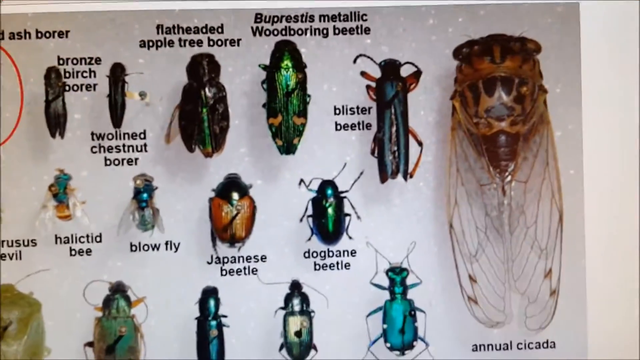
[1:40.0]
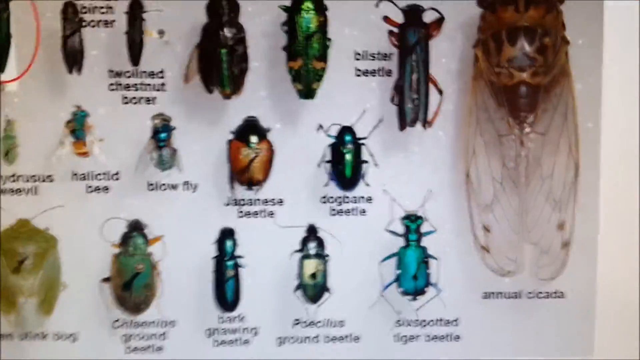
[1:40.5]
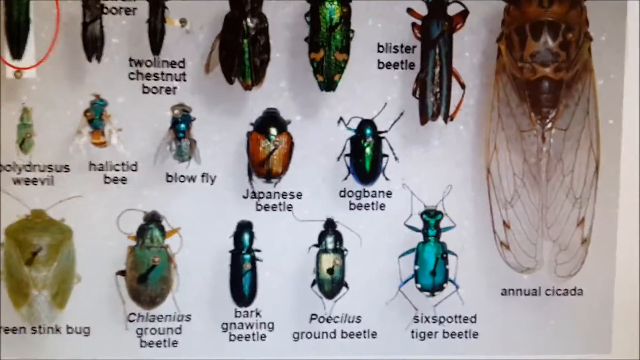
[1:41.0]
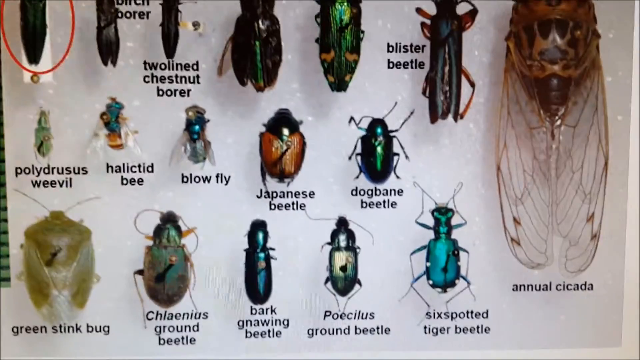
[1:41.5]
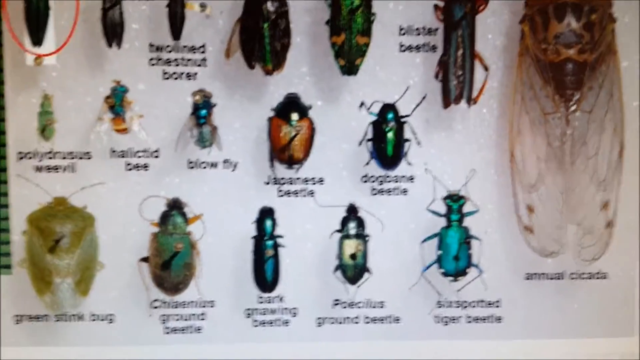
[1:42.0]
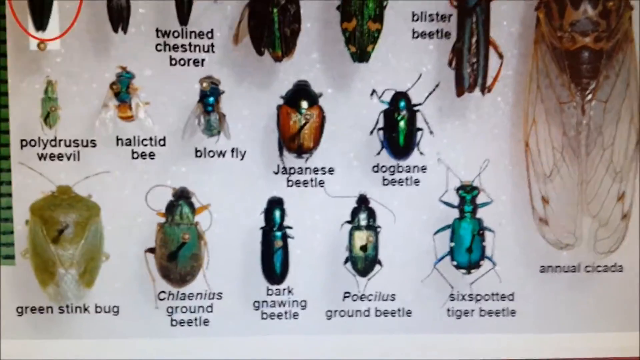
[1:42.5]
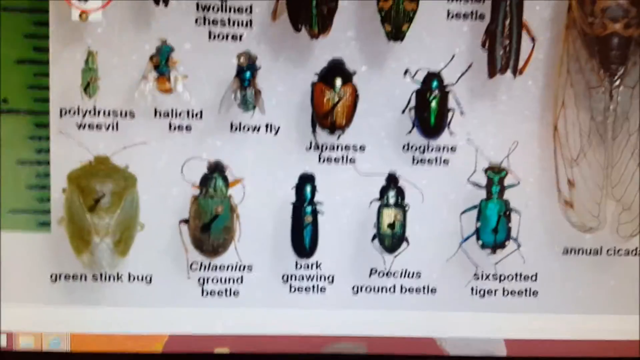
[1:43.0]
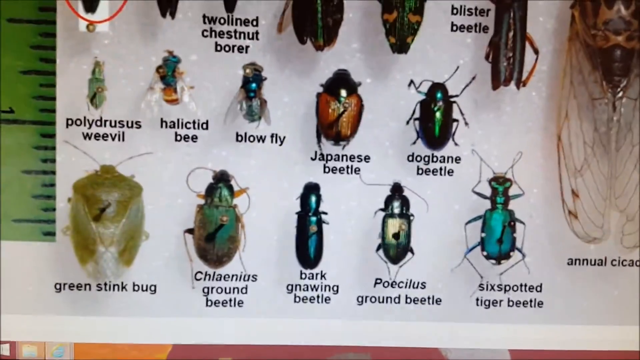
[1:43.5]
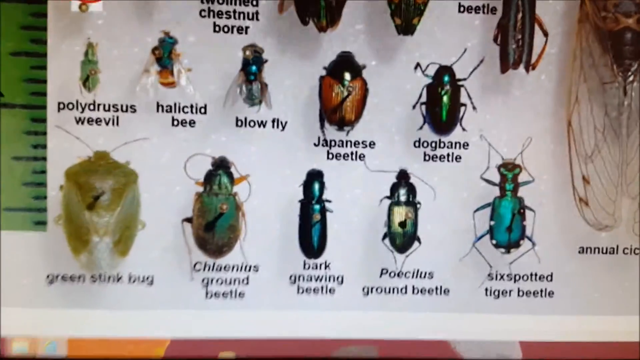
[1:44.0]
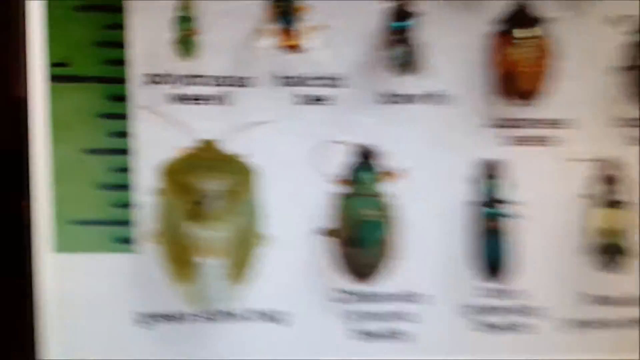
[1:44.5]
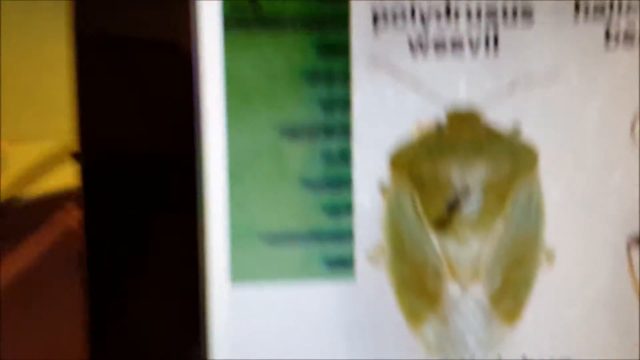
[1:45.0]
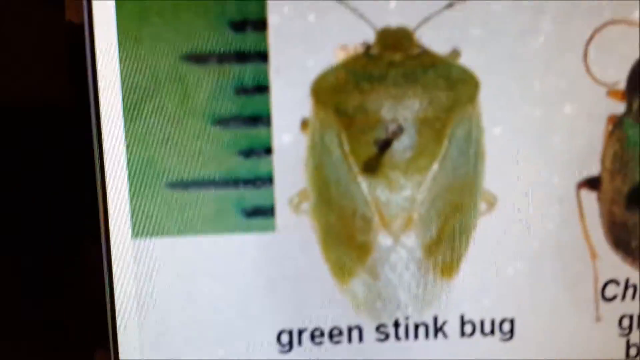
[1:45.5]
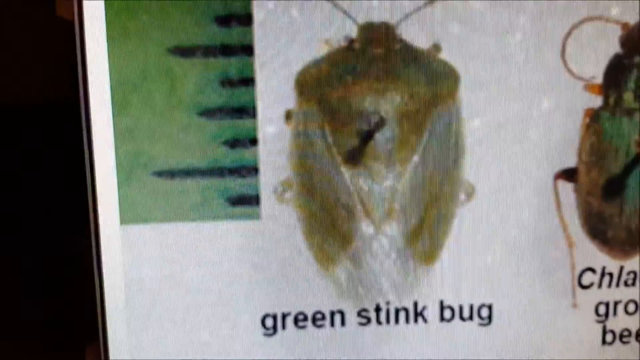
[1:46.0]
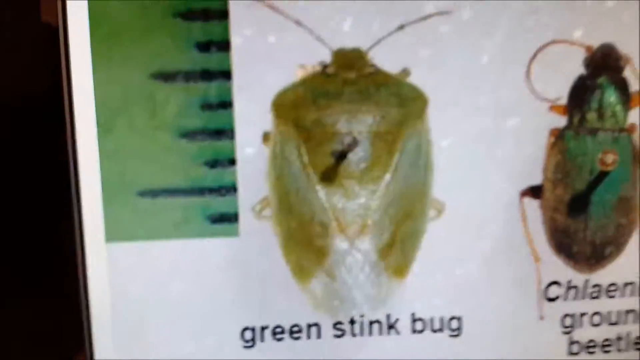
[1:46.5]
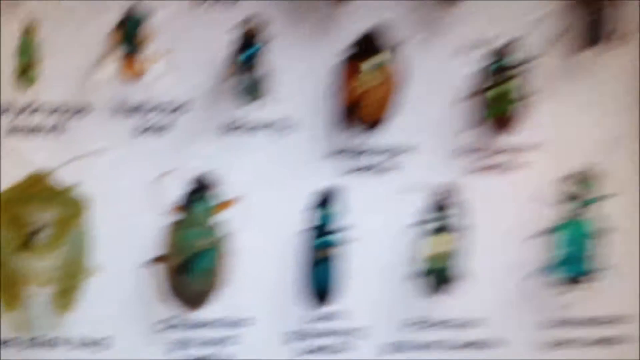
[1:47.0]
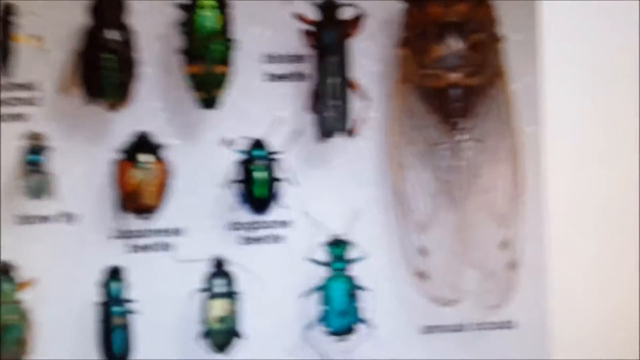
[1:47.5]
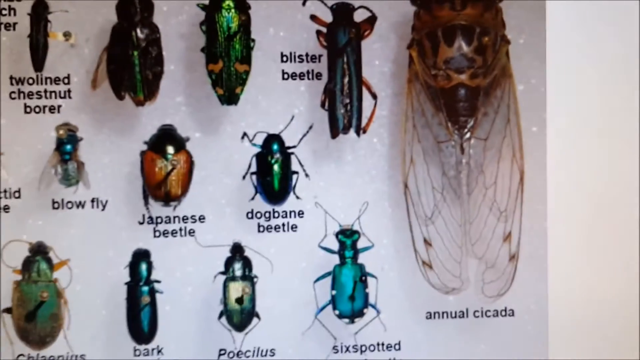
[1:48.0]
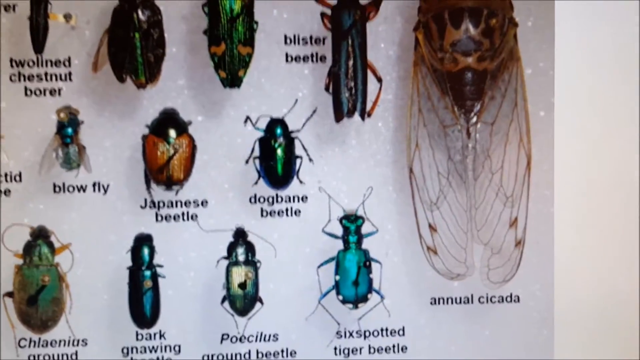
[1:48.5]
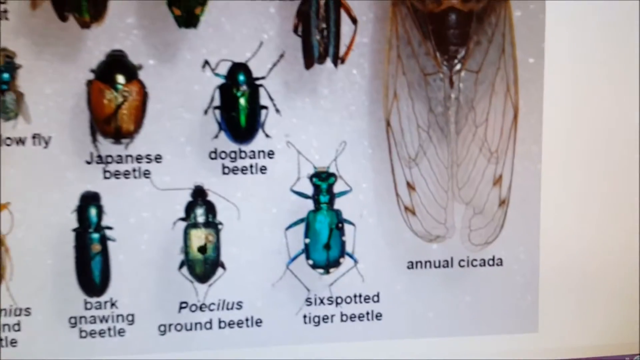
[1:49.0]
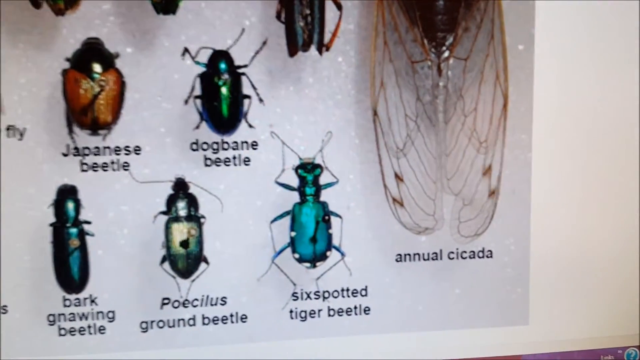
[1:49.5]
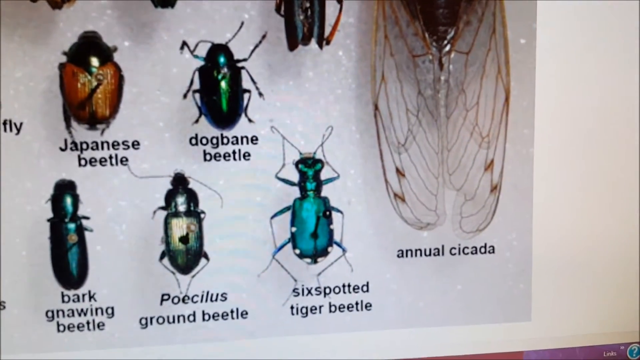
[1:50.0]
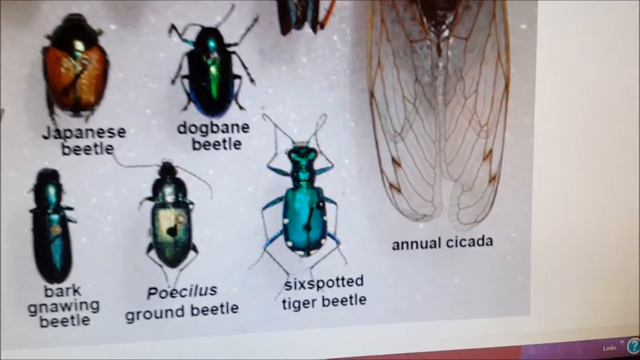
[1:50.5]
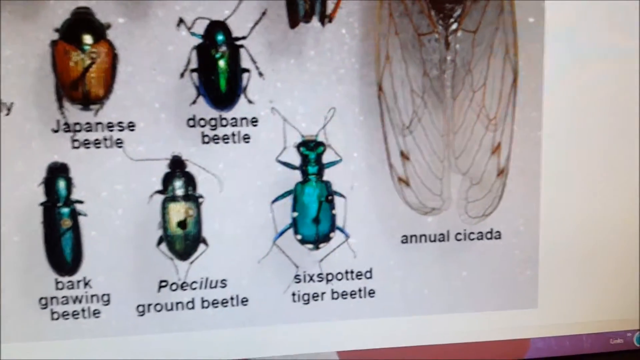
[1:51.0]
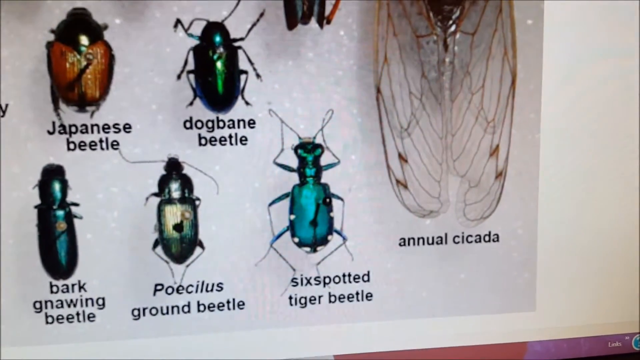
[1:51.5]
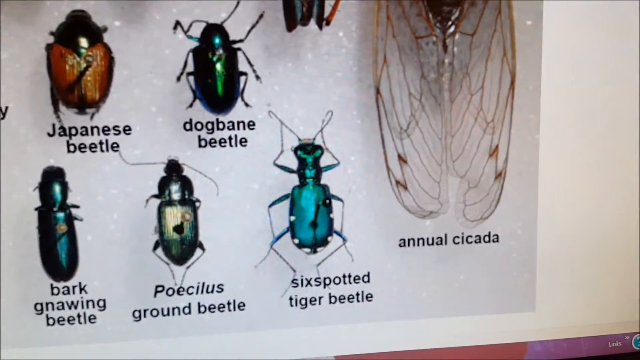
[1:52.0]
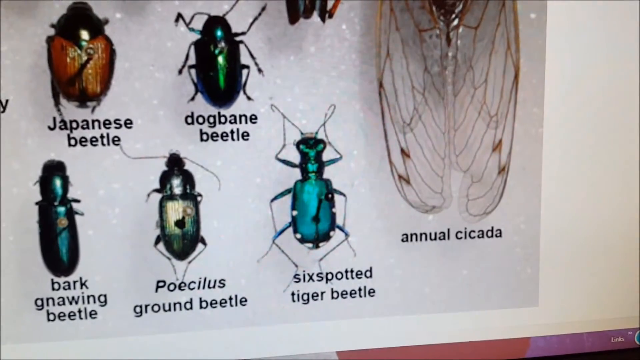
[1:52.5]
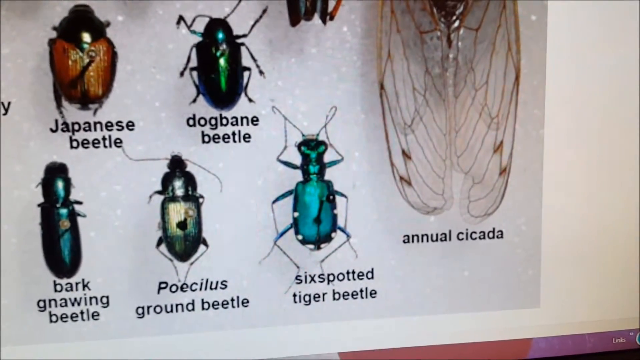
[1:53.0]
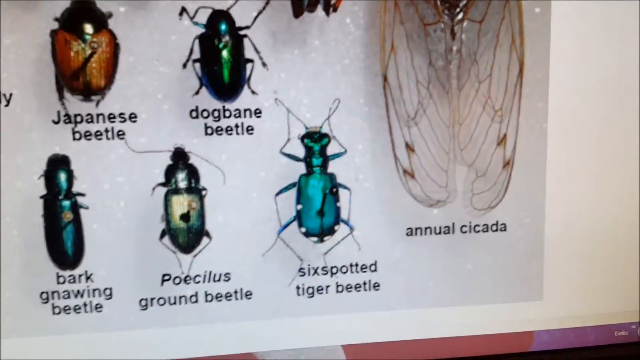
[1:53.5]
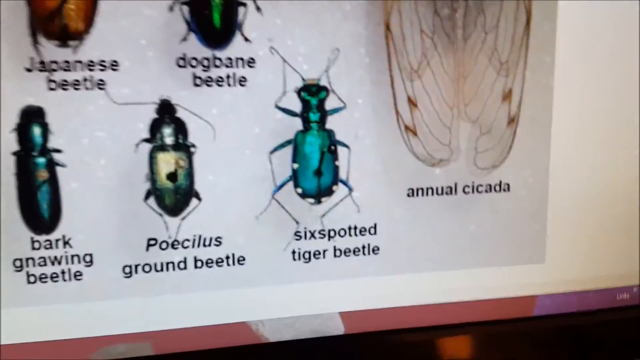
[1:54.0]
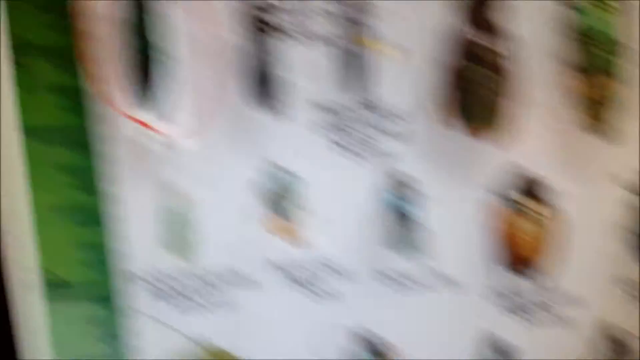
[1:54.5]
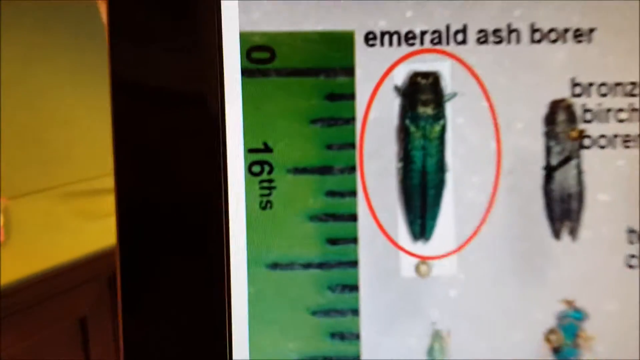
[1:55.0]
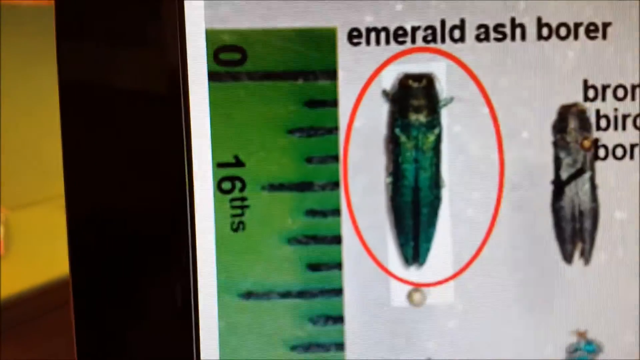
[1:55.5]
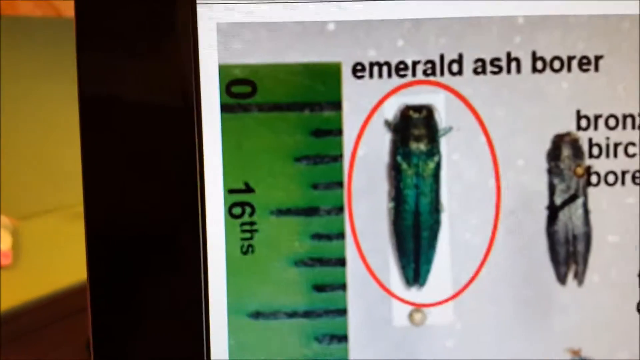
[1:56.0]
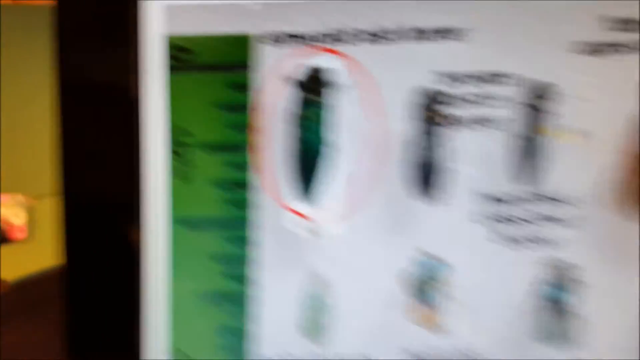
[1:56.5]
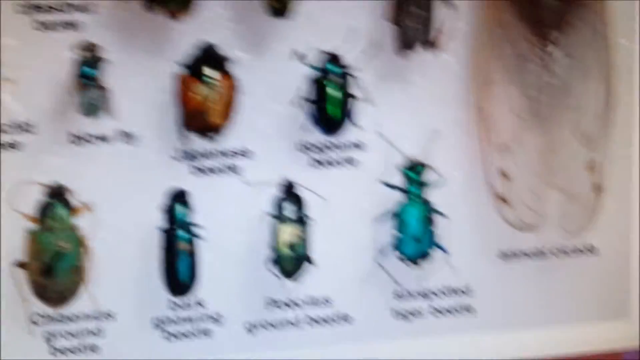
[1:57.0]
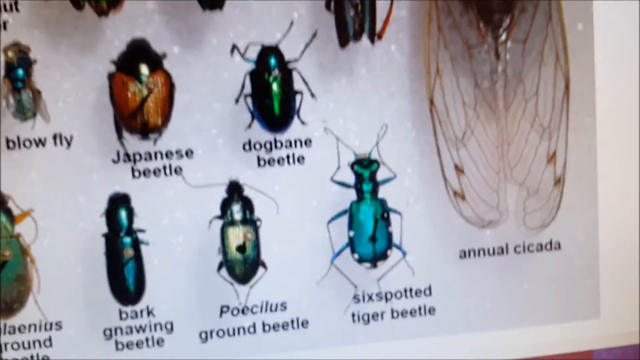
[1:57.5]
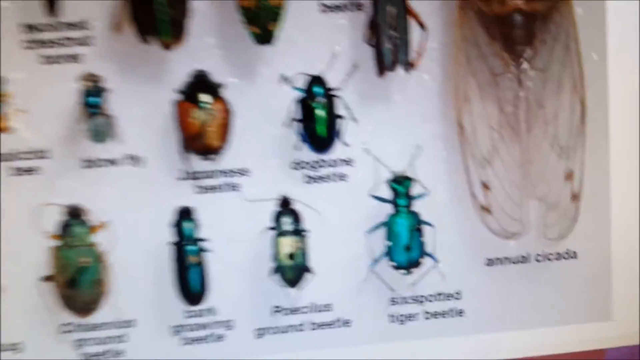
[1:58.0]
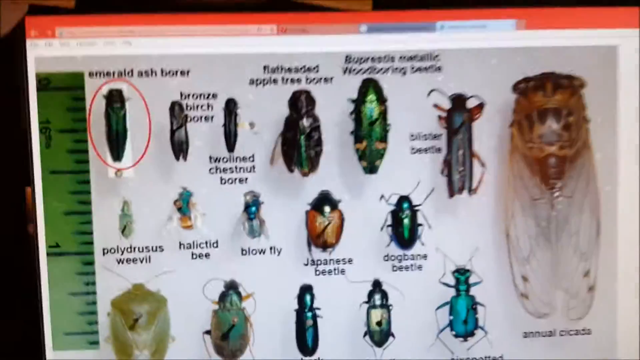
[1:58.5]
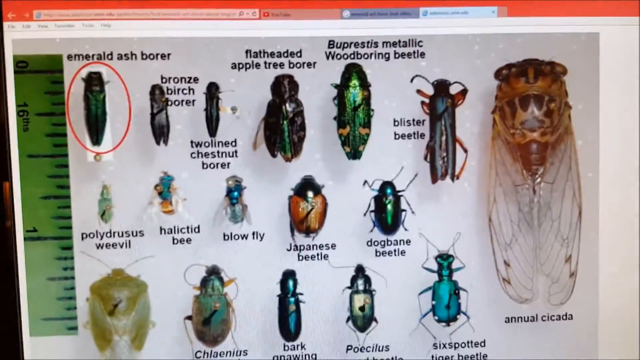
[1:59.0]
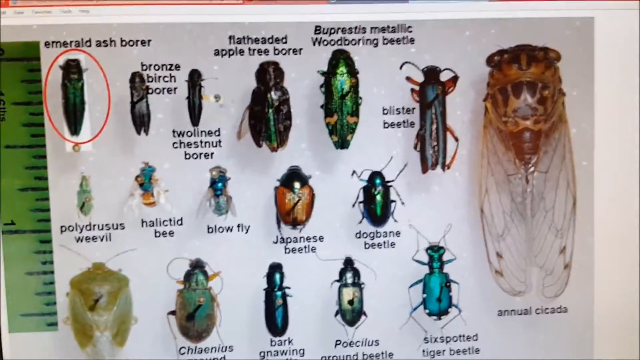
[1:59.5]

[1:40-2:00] The same screen of different beetles remains in view, showing a green stinkbug, a blister beetle, a blowfly, a Japanese beetle, a chestnut borer, a dogbane beetle, an annual cicada, a ground beetle and a bark-gnawing beetle. The camera seems to move to the top left to the emerald ash borer and then back down to the six-spotted tiger beetle, as if comparing the two. Many of the bugs have a very similar metallic green look, and they seem to vary in size: some are inches long, some less than half an inch long.